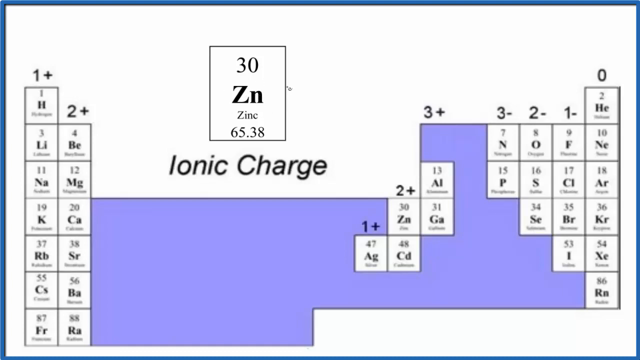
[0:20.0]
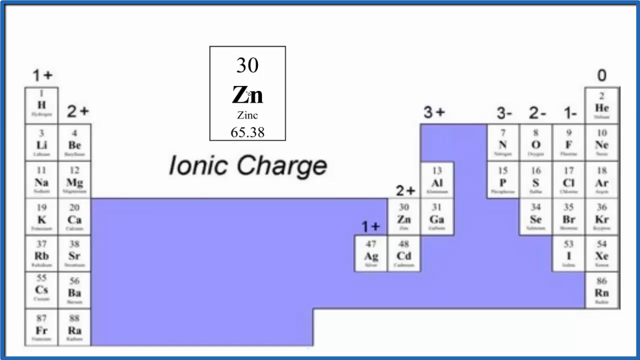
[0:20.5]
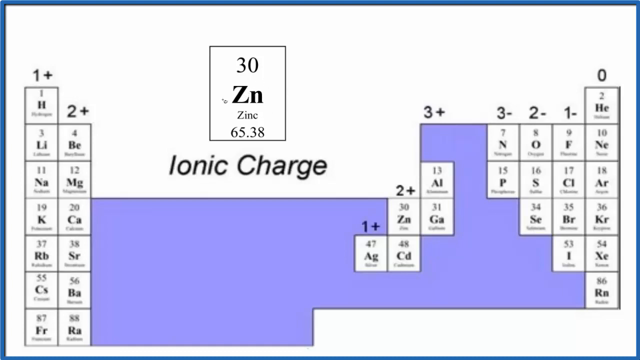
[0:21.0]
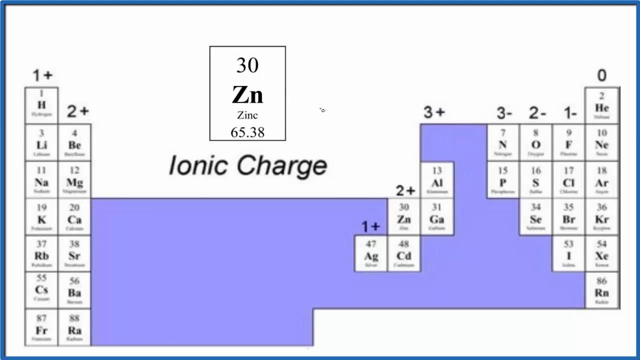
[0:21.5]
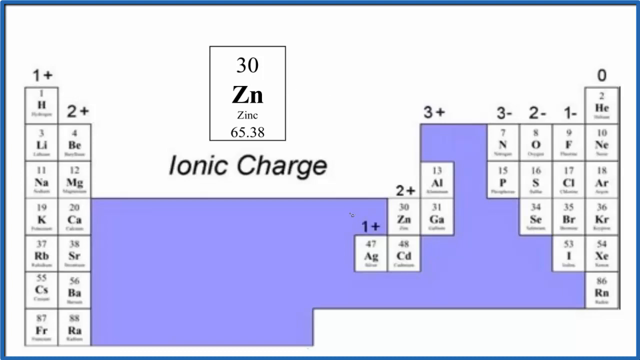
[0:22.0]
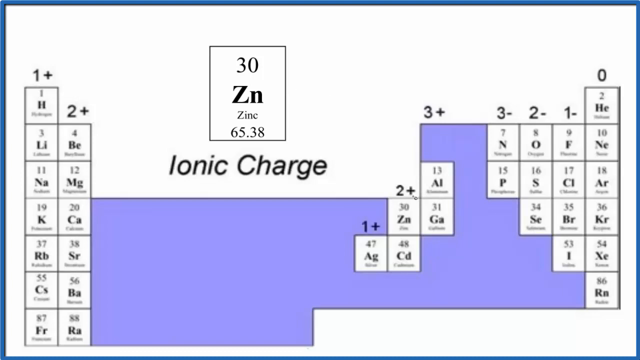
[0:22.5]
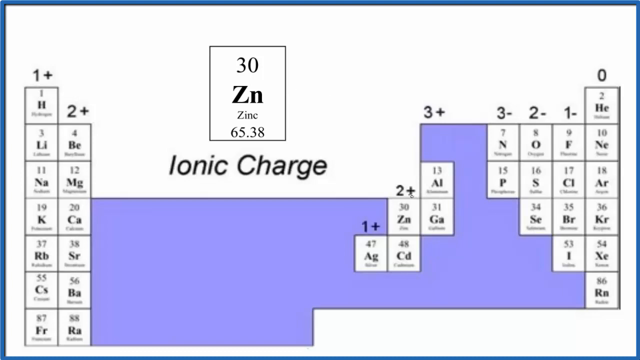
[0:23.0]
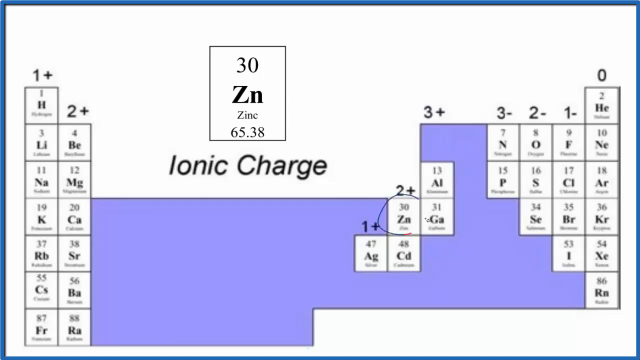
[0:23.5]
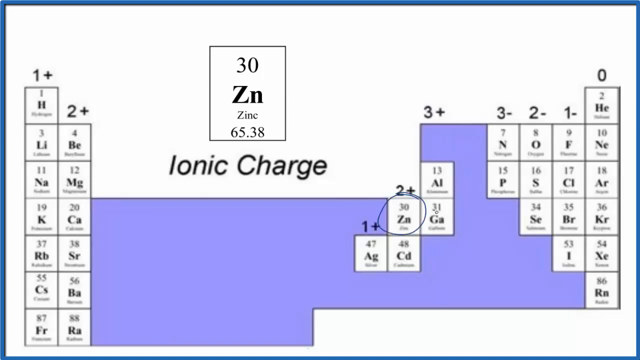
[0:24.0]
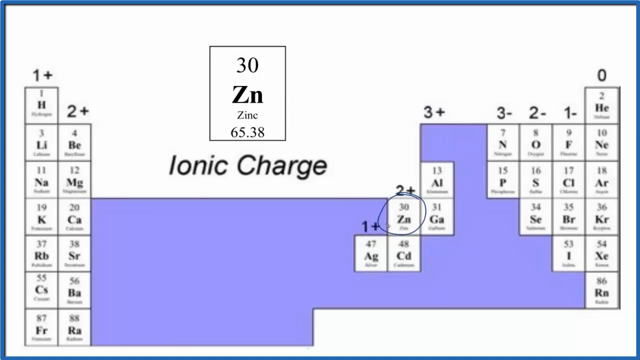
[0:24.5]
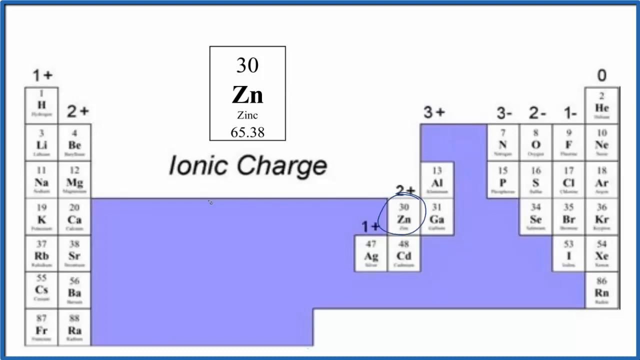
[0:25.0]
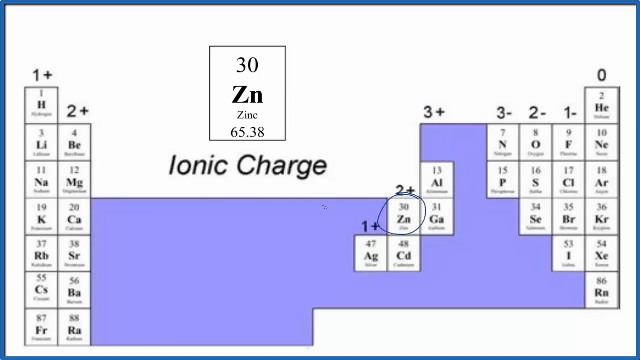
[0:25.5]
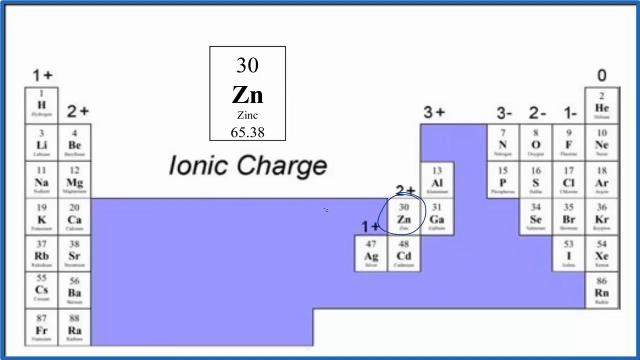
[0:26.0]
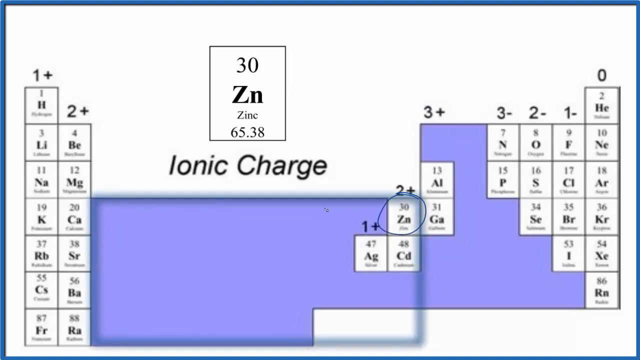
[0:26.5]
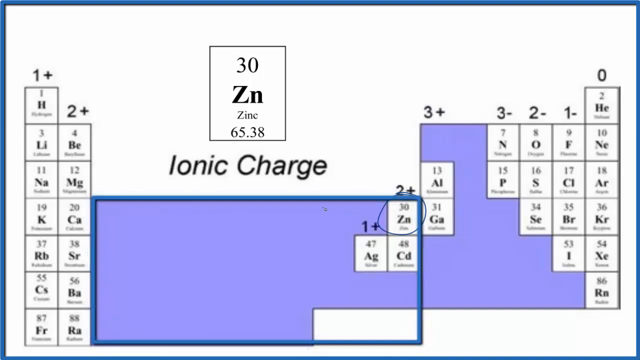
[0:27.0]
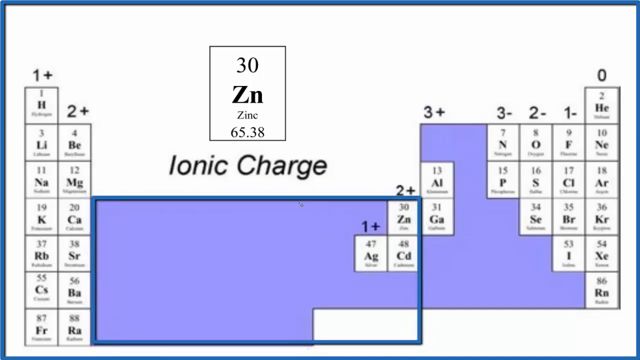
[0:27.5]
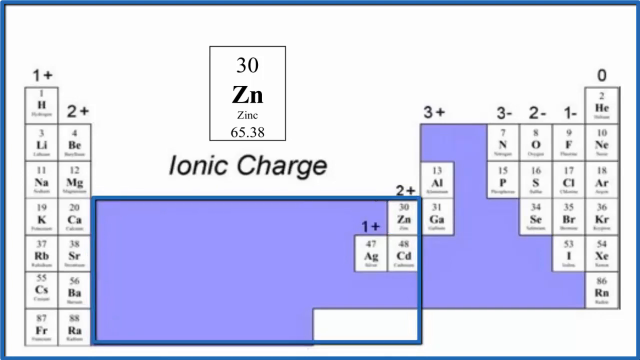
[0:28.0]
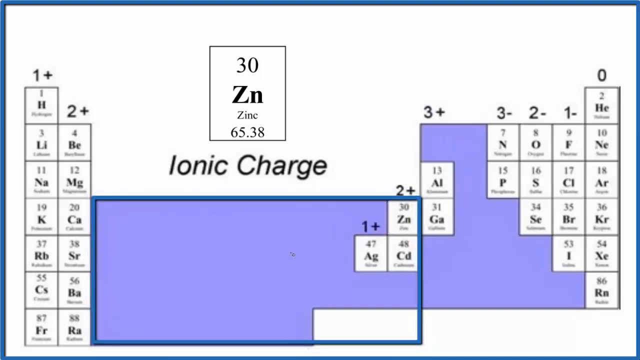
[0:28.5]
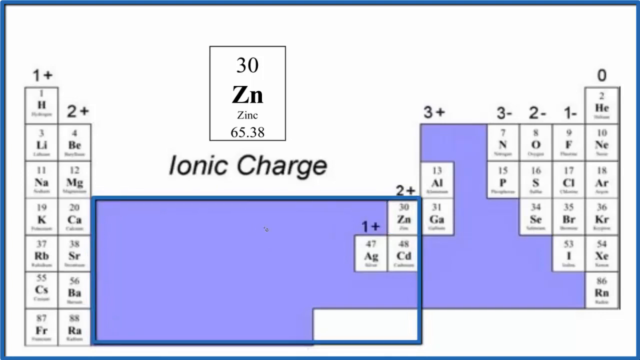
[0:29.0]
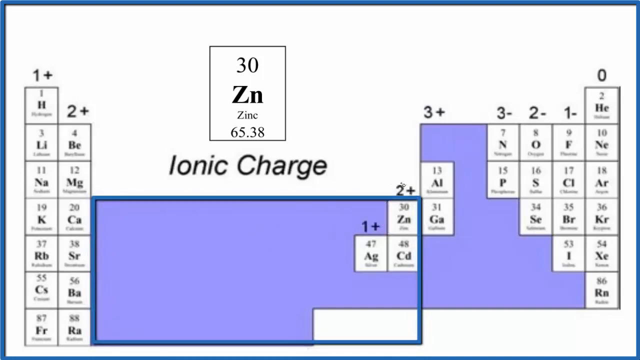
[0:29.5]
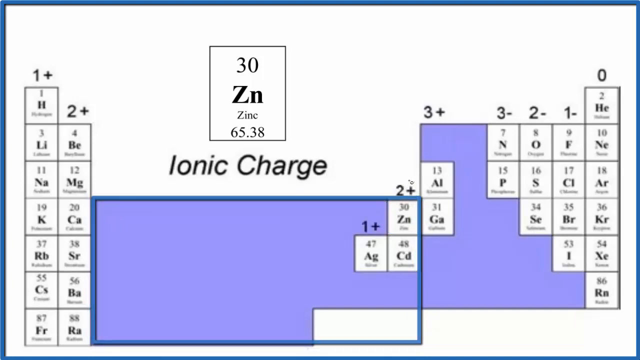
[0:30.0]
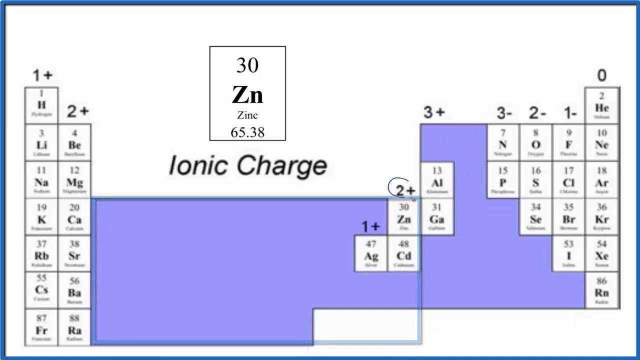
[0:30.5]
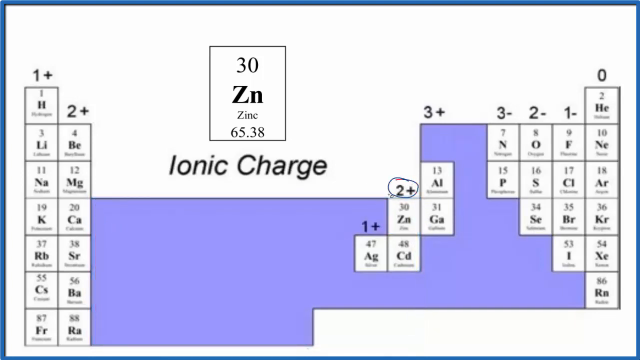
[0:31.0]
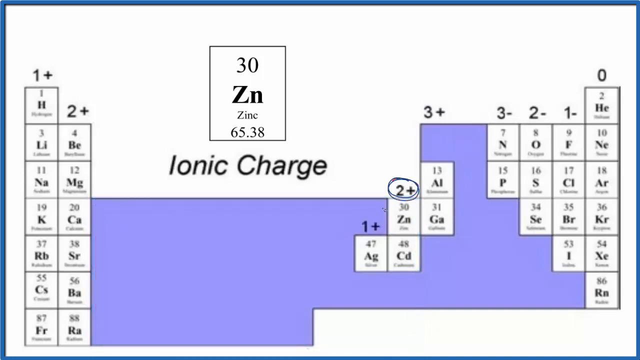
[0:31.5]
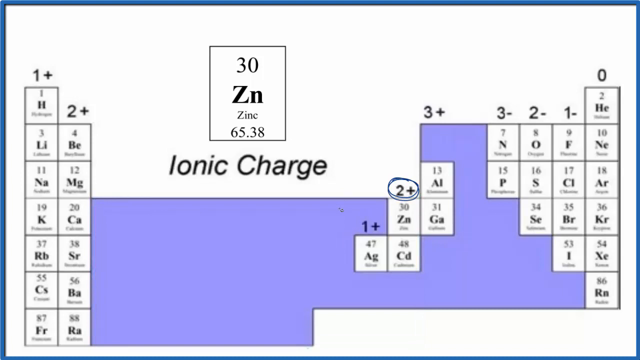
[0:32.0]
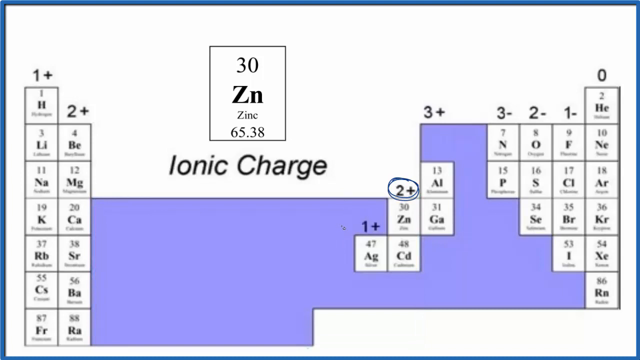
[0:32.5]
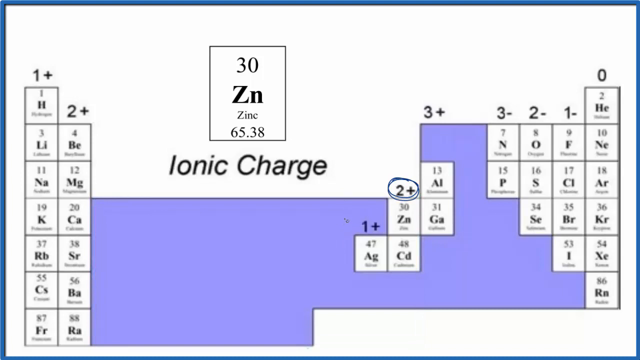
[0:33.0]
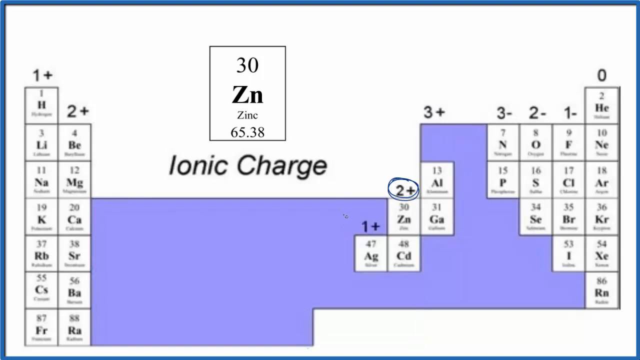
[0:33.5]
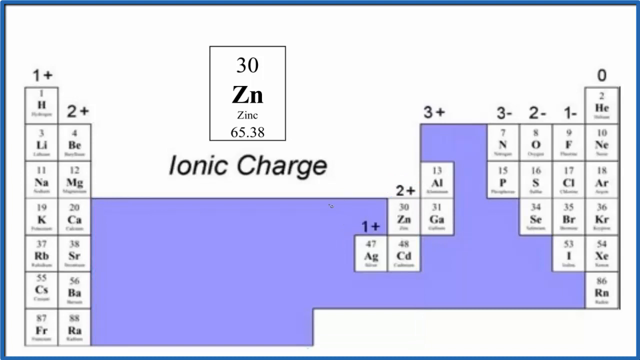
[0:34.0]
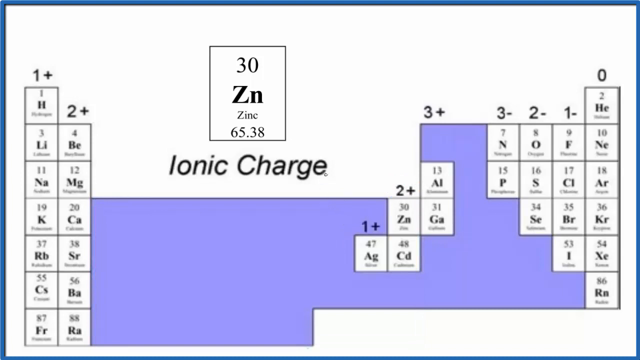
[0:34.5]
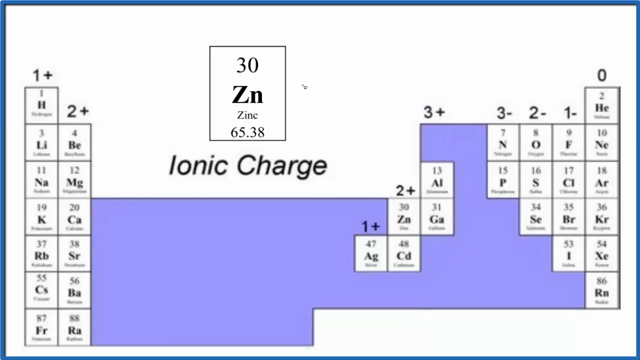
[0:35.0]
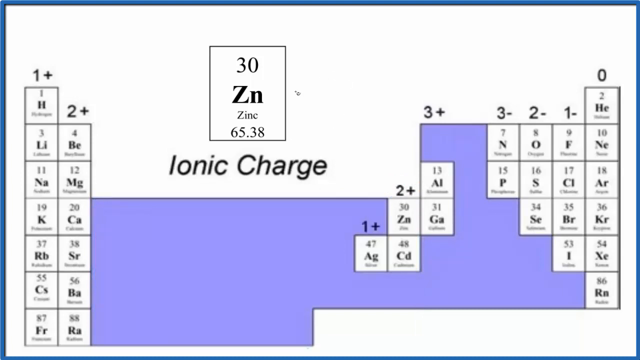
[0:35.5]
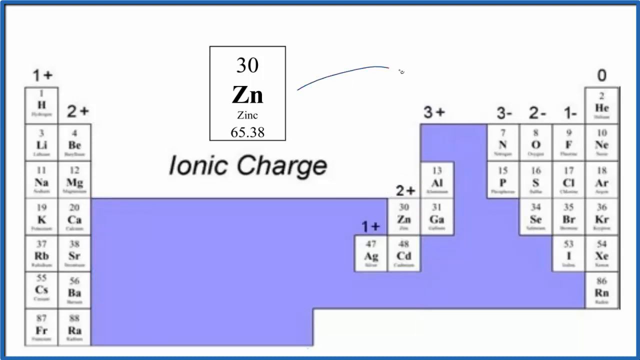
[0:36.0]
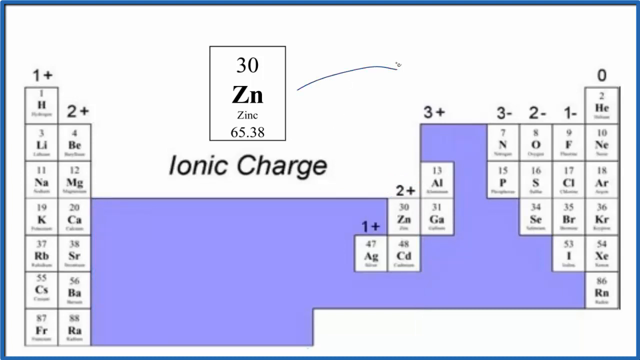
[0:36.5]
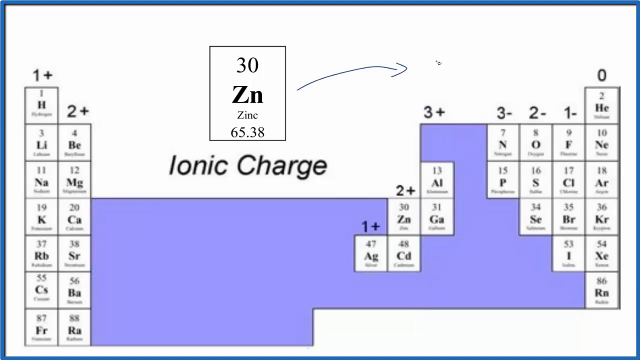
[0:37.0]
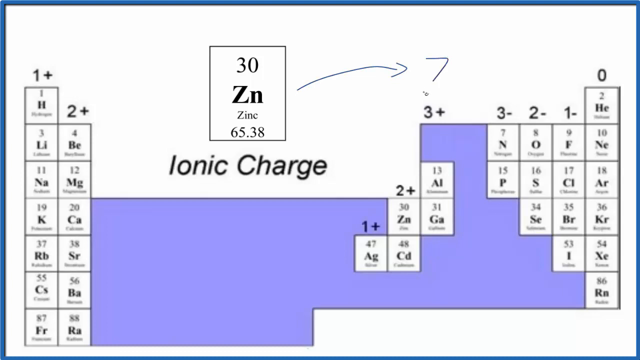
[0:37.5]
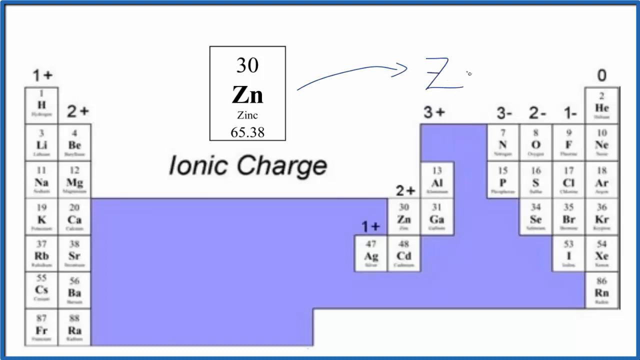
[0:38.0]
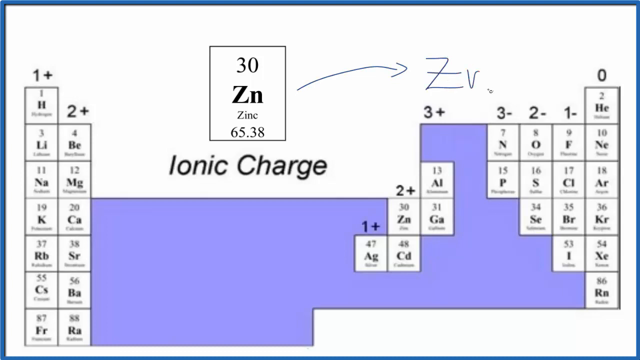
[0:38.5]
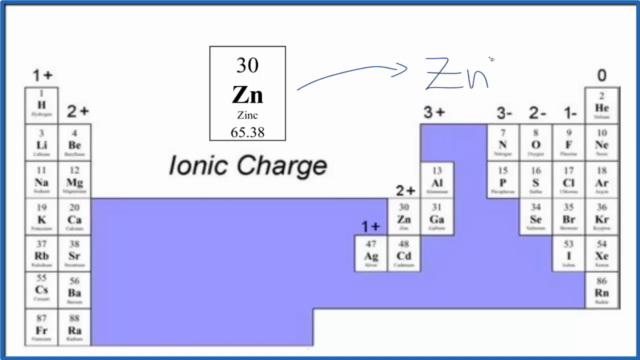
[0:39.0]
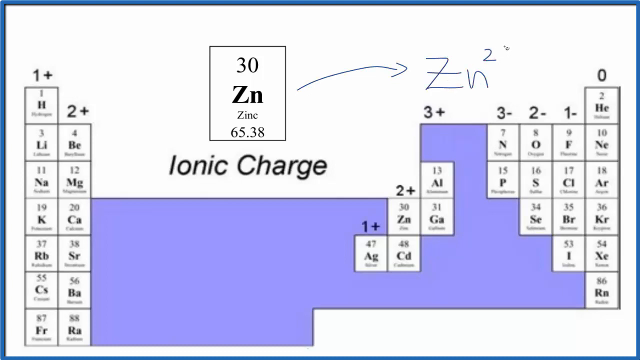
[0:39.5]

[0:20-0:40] The chart stays the same, but in the middle section with the step-down effect, a circle has been drawn in blue pen ink around the middle box at the top. That box says "30 ZN Zinc" and is the same box seen in the top middle section of the video, shown in a larger font. To the left of it, a border in blue ink has been drawn around that box, attaching to the boxes on the left-hand side. The border then disappears, and the circle drawn around the Zn box also disappears. A drawing appears at the top of the screen, linked to the left-hand side of the original larger box: a curved arrow points from the box on the left-hand side toward the right-hand side of the screen. Above the arrow is the word "losses", and below it a formula reads "2E/". At the end of the arrow is a large handwritten "ZN", with "2+" at its top right.